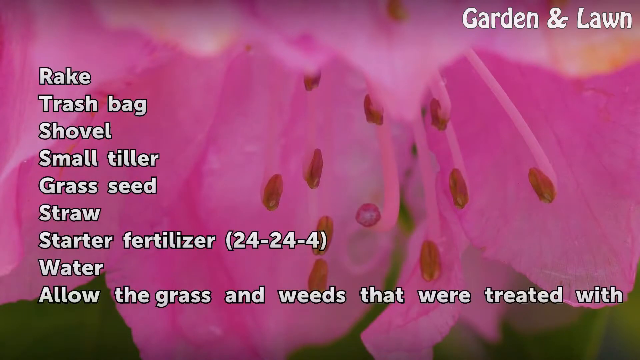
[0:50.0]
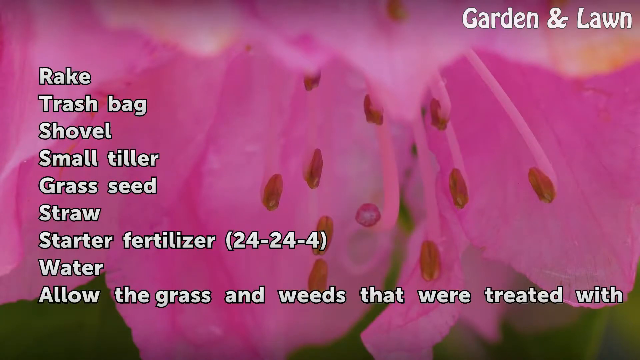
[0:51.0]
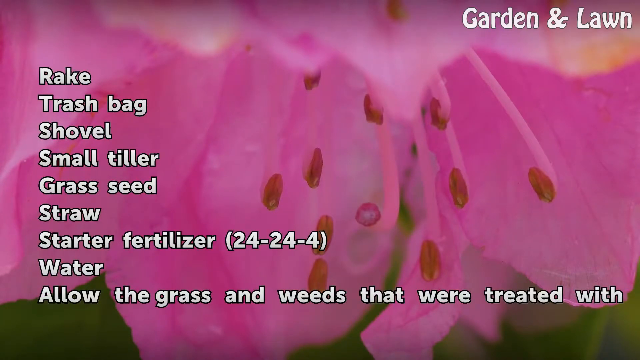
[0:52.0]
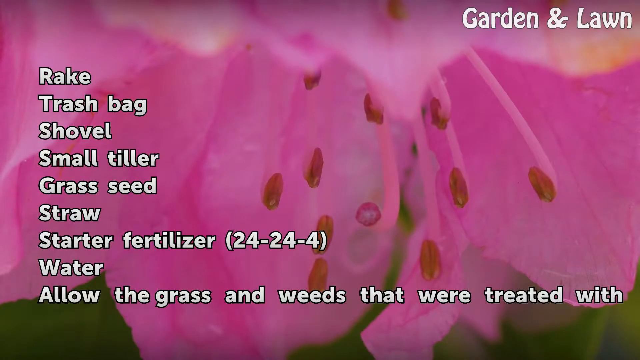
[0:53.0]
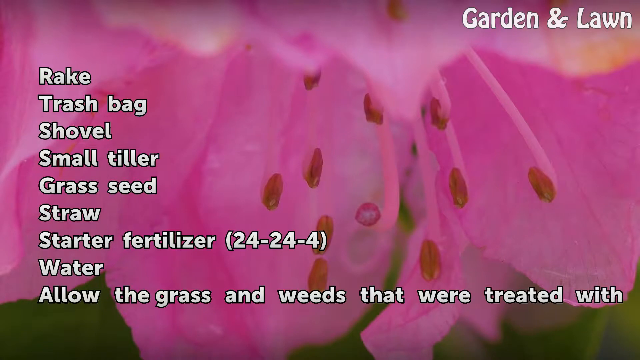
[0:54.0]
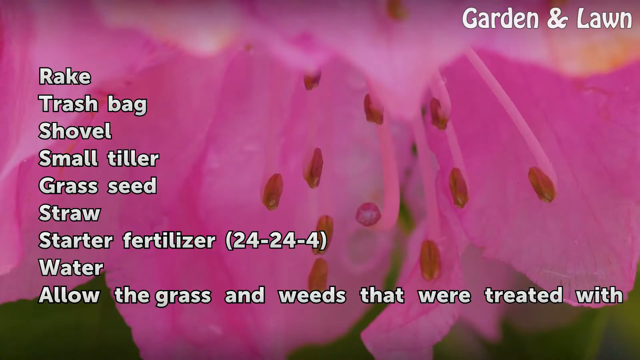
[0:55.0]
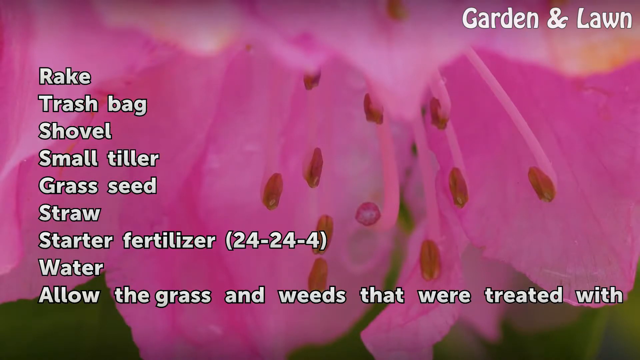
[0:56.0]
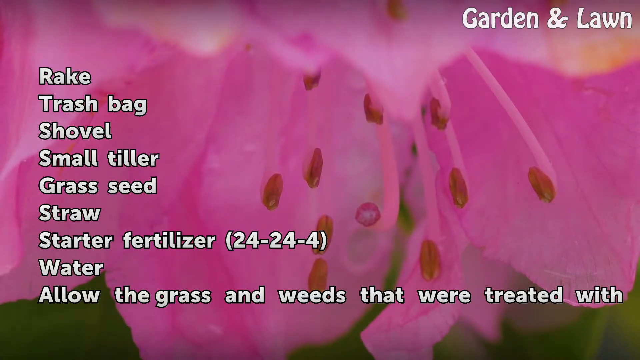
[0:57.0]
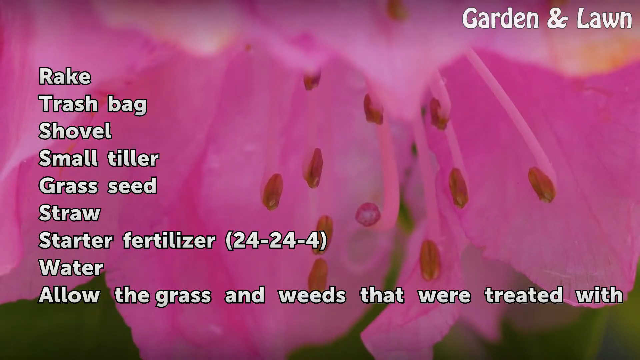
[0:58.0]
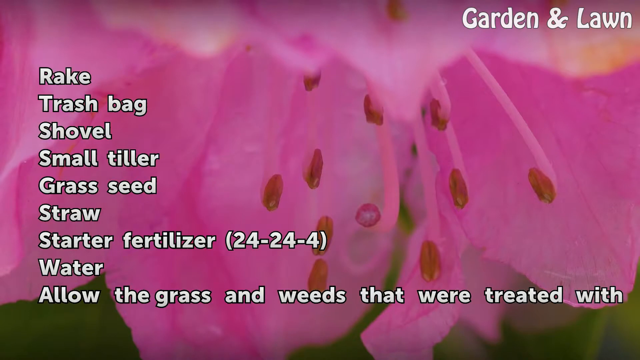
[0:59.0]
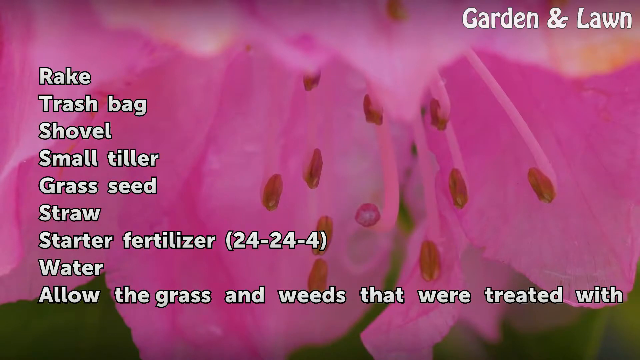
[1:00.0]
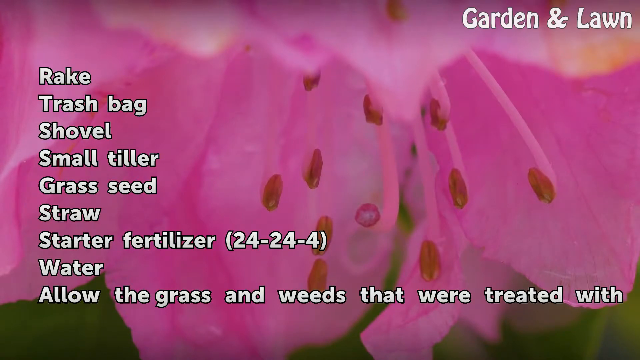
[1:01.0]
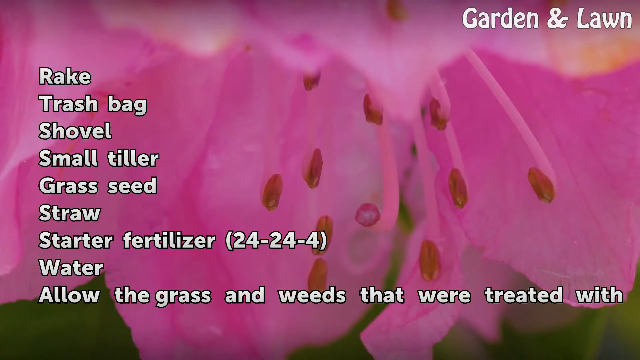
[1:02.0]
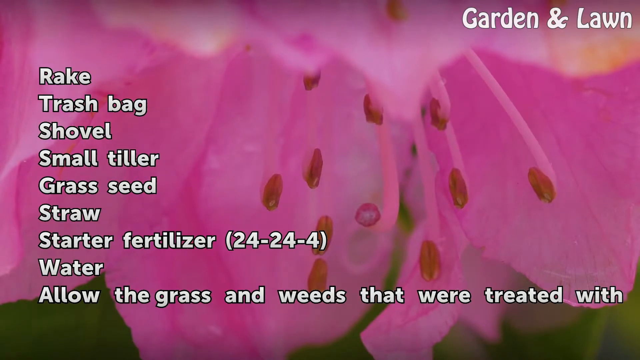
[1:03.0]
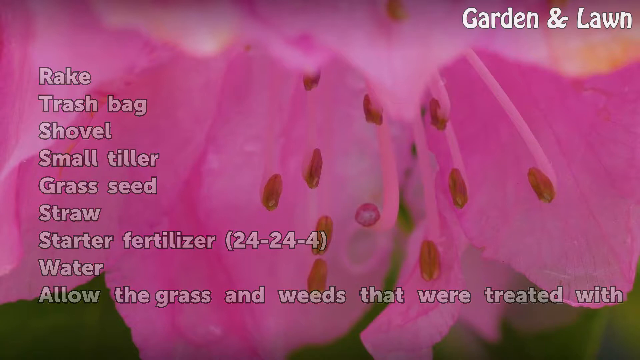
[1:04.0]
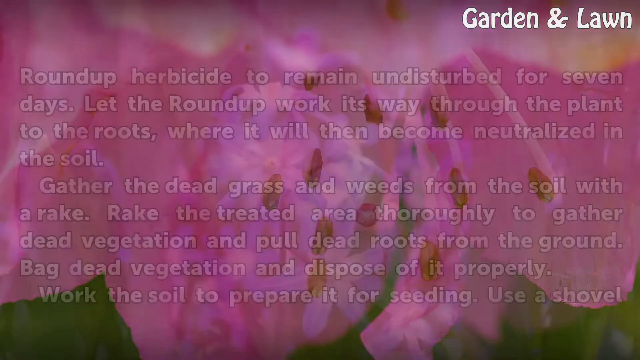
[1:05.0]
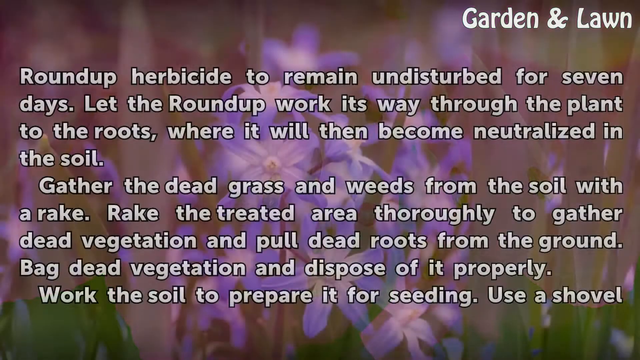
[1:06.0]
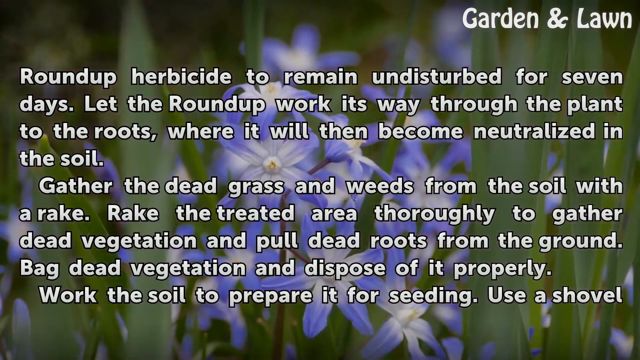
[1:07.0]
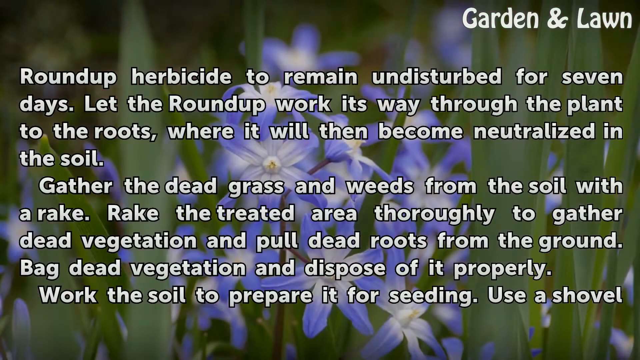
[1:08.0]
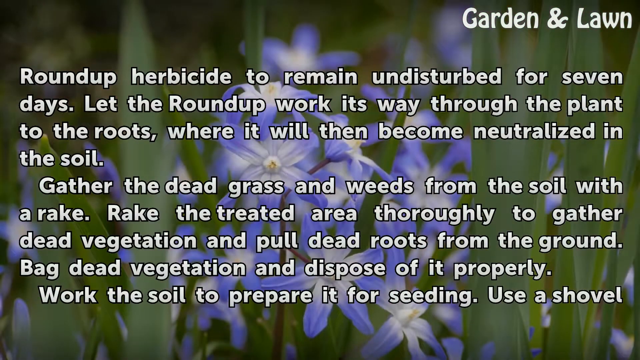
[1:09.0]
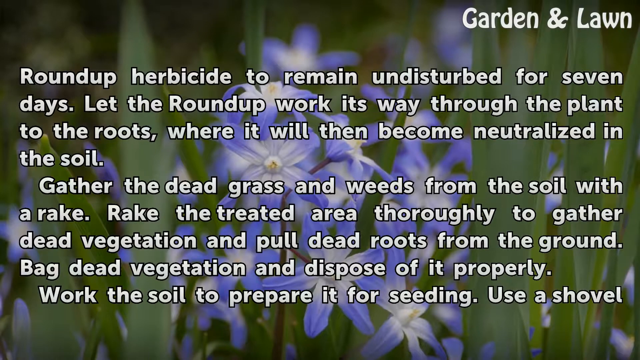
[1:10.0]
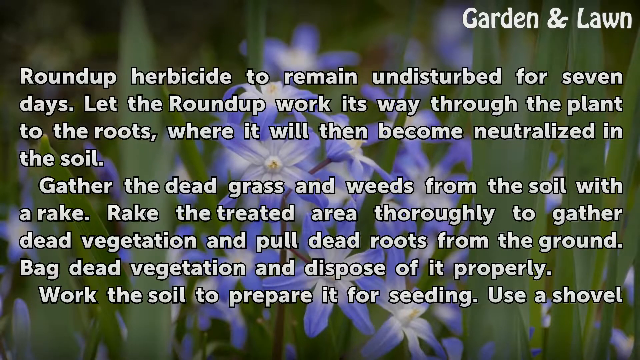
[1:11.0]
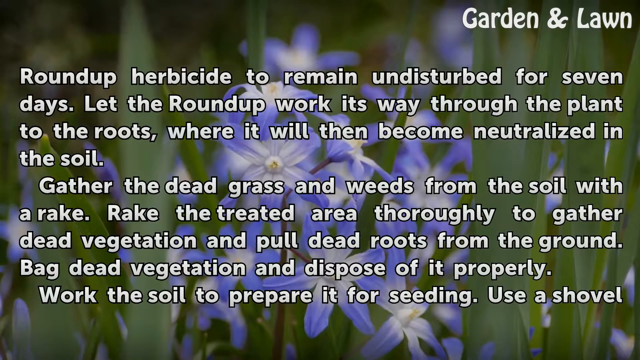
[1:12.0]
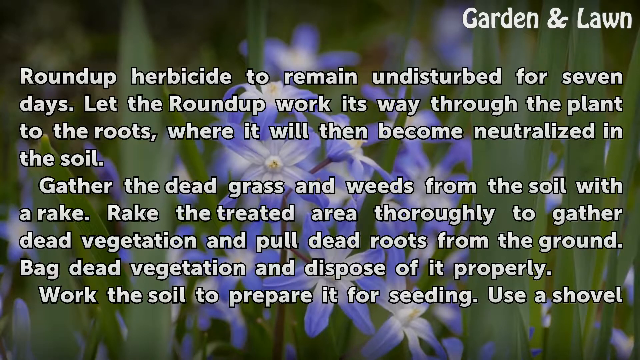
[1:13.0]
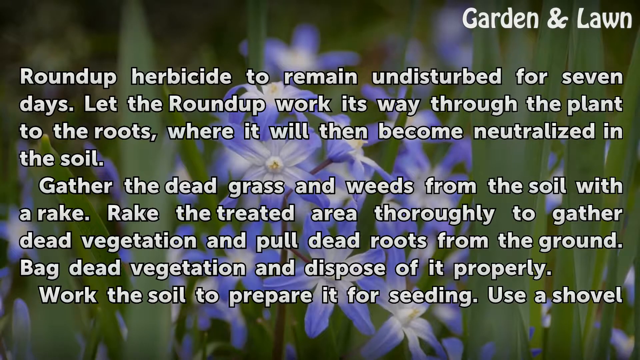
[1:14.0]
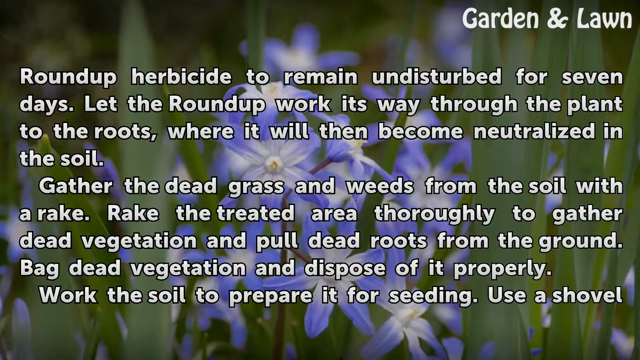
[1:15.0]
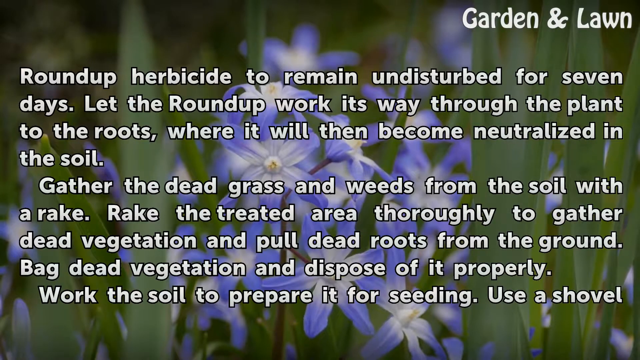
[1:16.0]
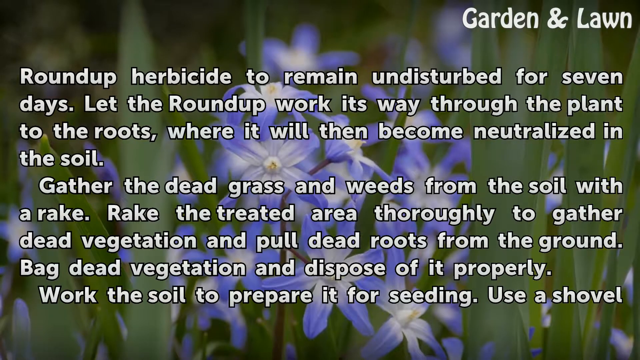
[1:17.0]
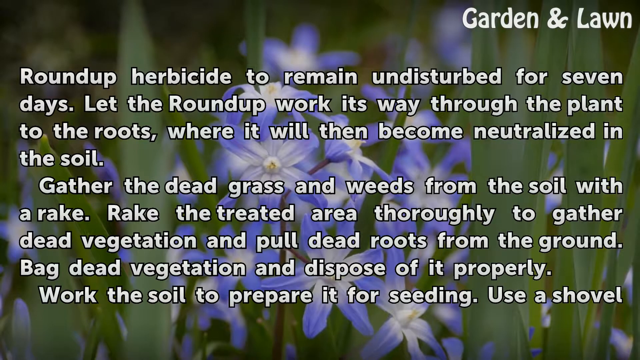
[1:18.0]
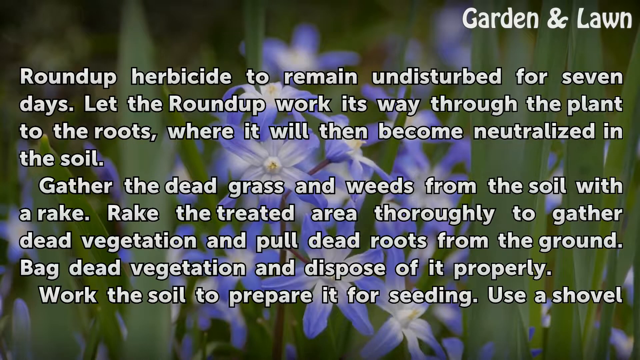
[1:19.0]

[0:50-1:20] Three hands in different colors, navy blue, sky blue and light blue, appear. Then an orange flower blown by the wind appears with a message: "Roundup is an herbicide that is widely used to control the unwanted growth of the grass, weed, and small brush featuring glyphosate", followed by "the effect of Roundup is the dieback of grass and weed to which it was applied. Seeding area can be done to reverse the effect of Roundup following dieback." Behind the message is a purple flower that looks healthy and flowering. A pink flower then appears with a list including a rake, trash bag, small tiller, grass seed, straw, starter fertilizer 24 and water. Another message follows about leaving the area undisturbed for seven days so the Roundup works its way through the plant to the root and becomes neutralized in the soil, then gathering the dead grass and weeds with a rake, raking the treated area thoroughly to gather dead vegetation and pull dead roots from the ground, disposing of it all properly, and working the soil to prepare it for seeding. A flower is behind this message.